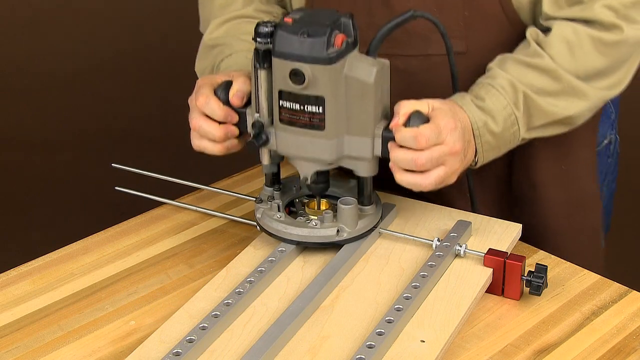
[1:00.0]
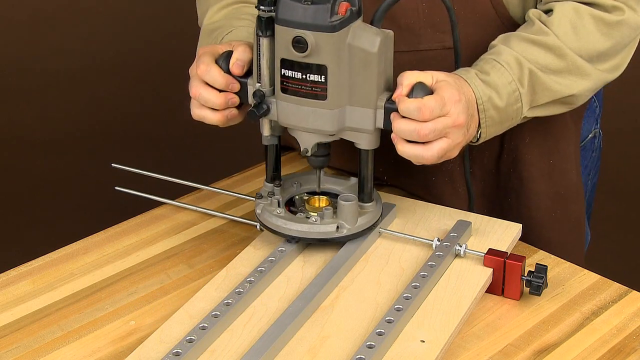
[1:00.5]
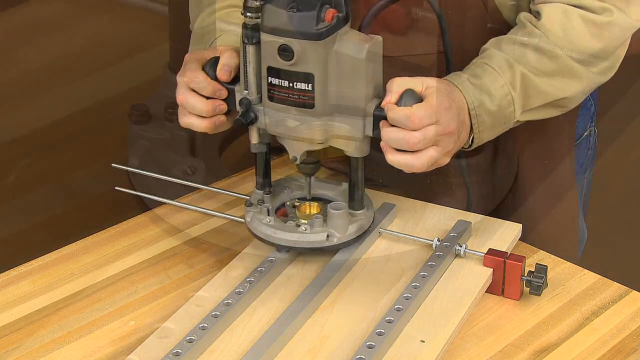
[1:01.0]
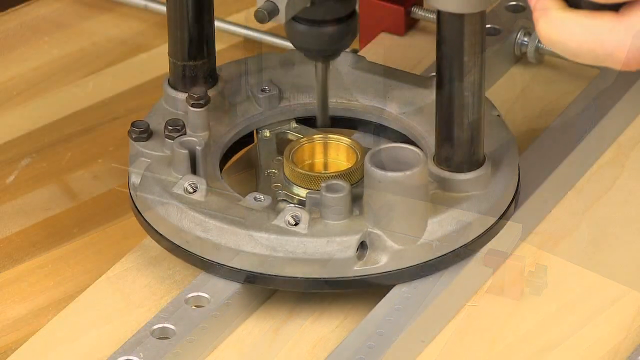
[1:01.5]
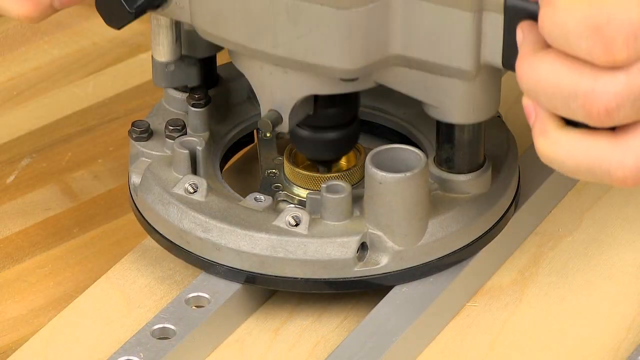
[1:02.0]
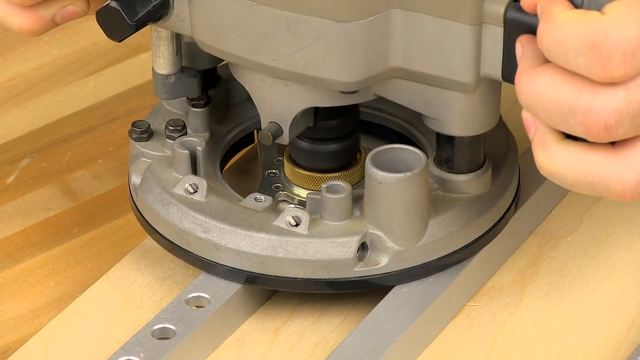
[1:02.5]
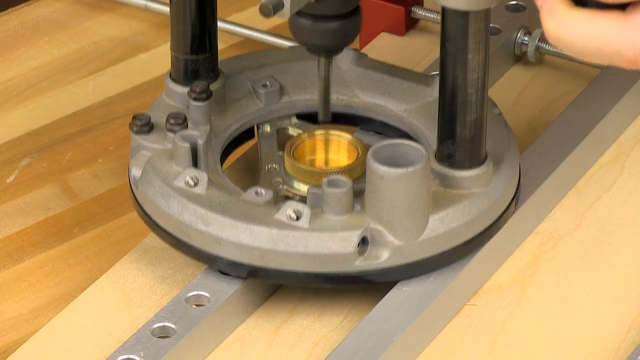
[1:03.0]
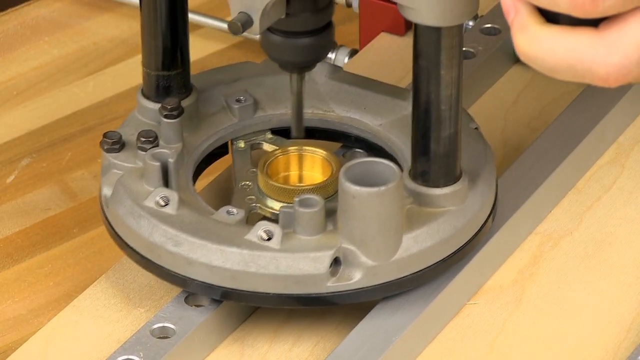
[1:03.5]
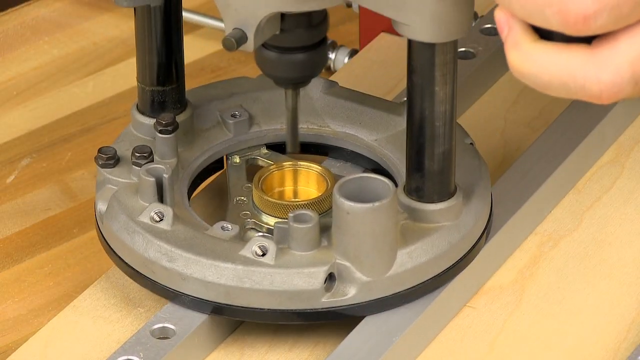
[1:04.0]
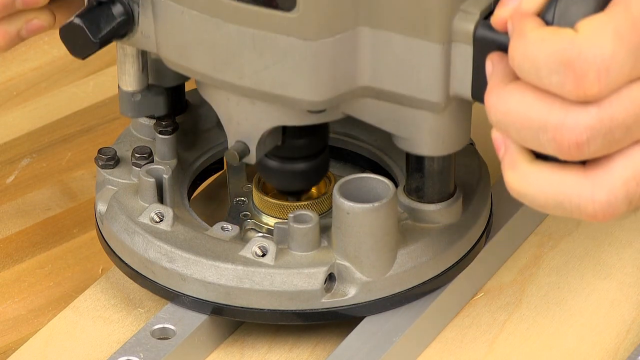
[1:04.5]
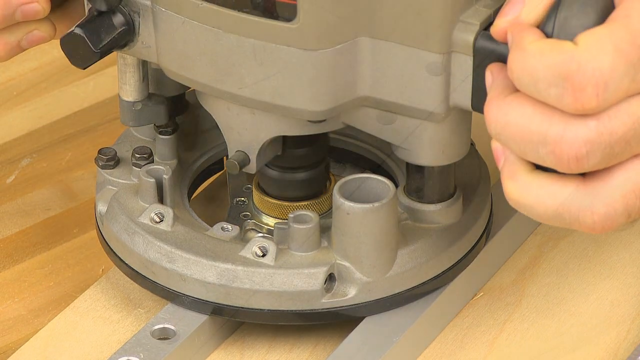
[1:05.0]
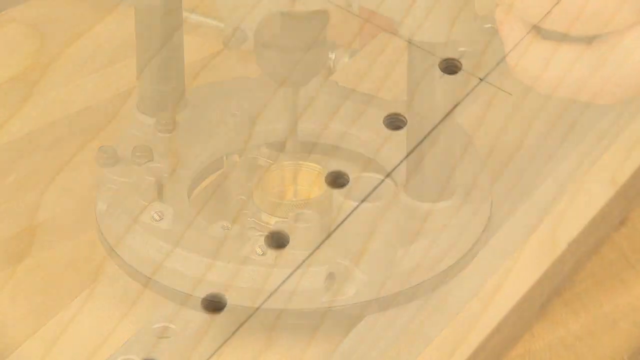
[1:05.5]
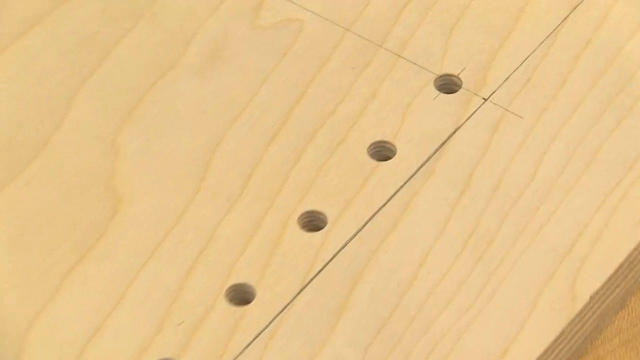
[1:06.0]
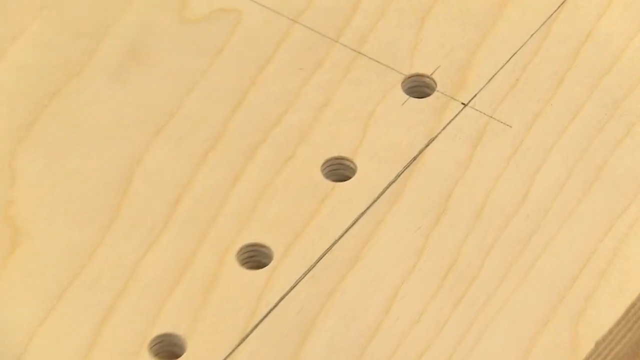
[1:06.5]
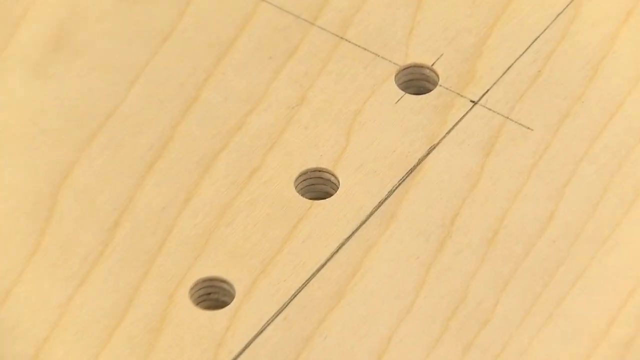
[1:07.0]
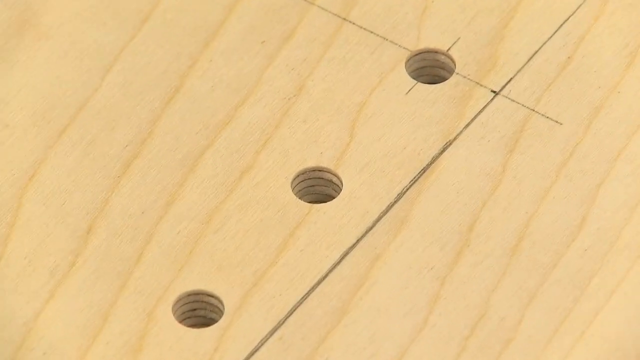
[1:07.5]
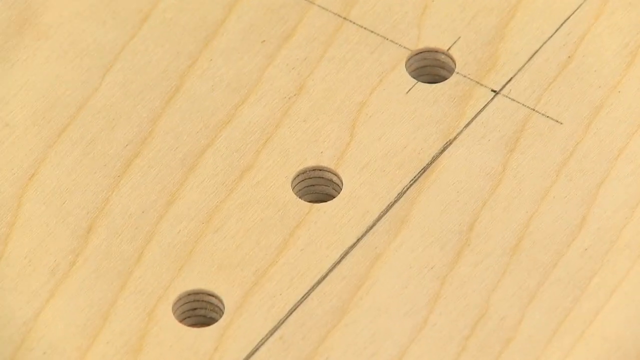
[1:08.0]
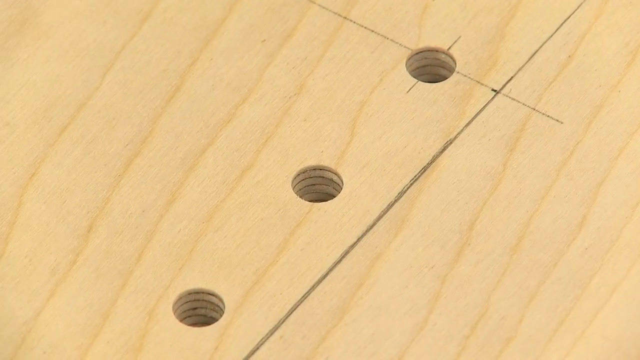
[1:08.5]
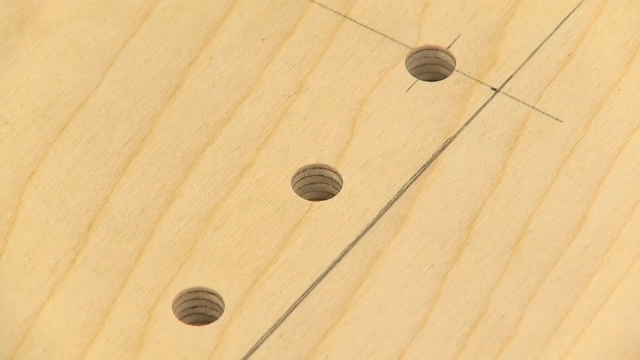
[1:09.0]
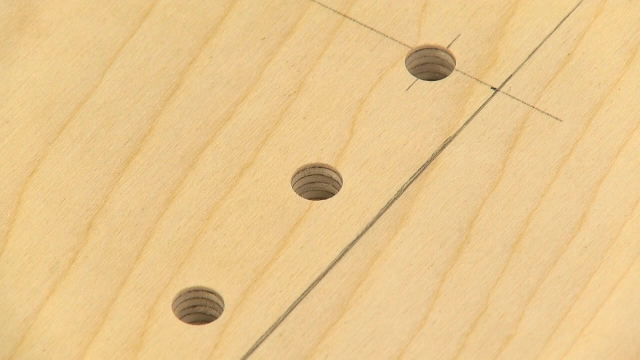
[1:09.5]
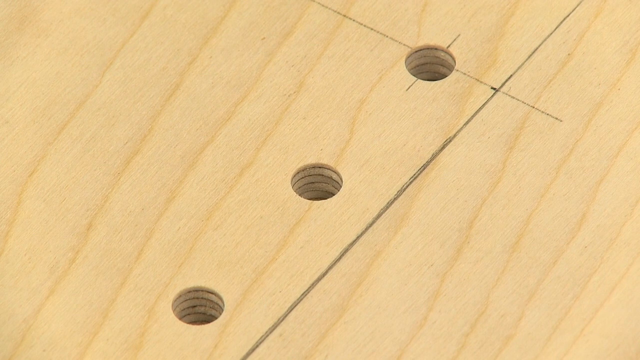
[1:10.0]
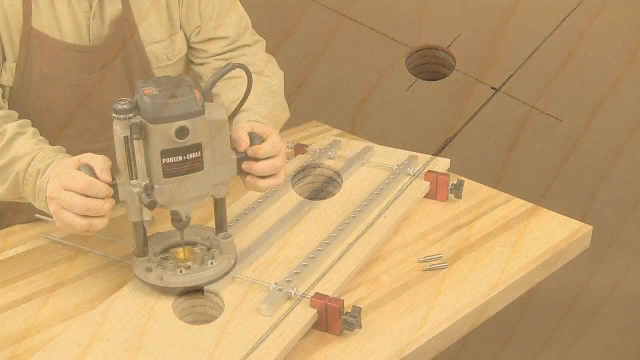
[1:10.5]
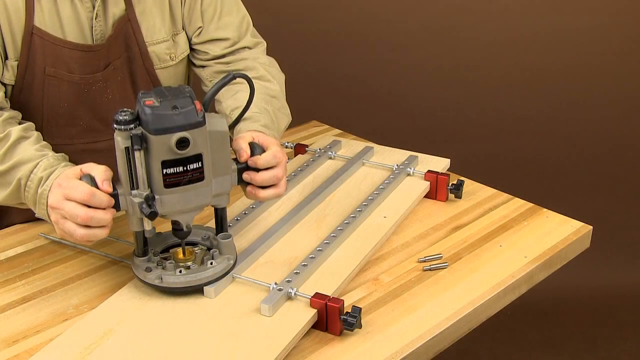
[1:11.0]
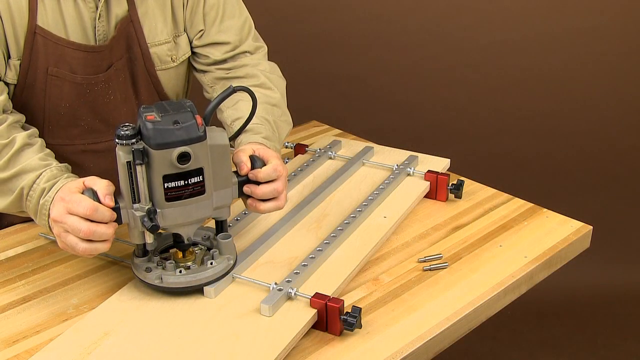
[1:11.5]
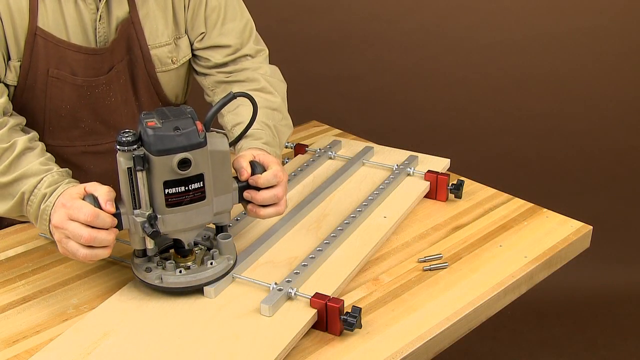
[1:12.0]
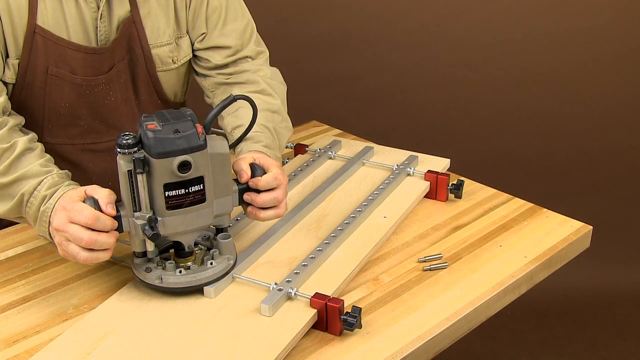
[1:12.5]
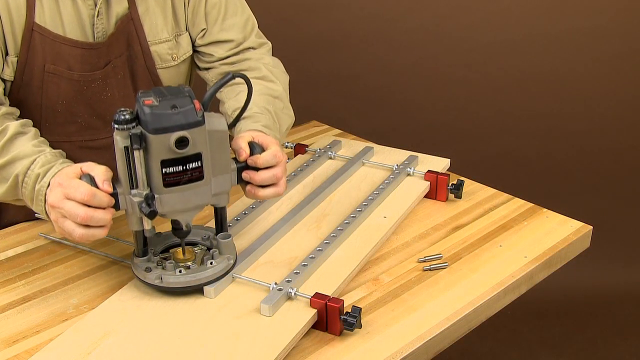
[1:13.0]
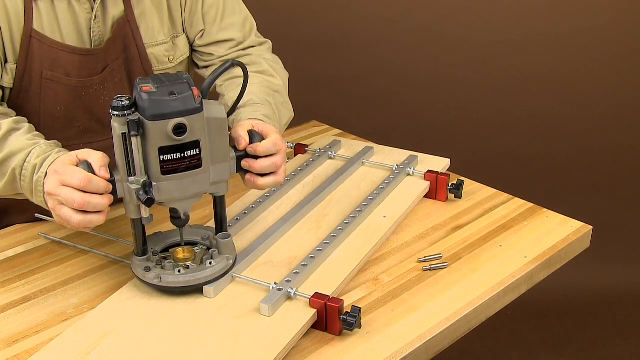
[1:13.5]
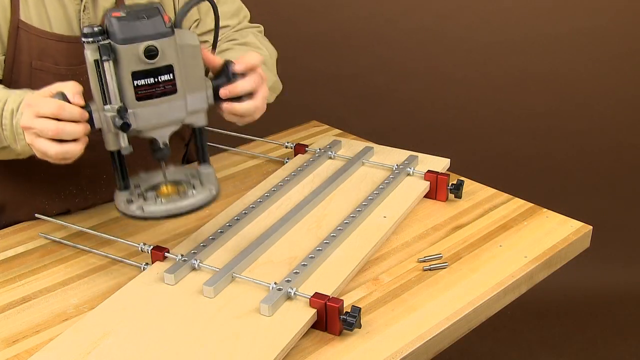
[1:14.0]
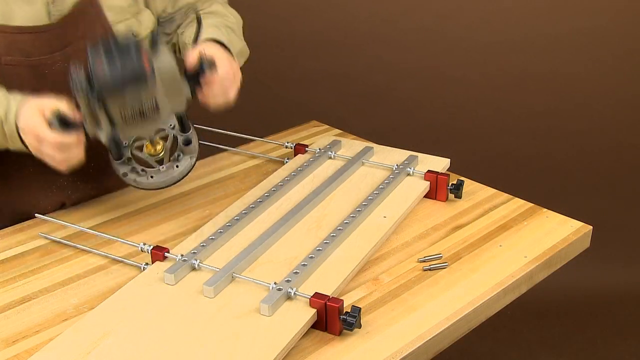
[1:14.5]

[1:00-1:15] The man uses the drill to move from hole to hole on the jig, drilling. Then the jig is gone, and the view pulls back to show all of the holes made using the jig, along with the pencil drawings; the holes look very precise. The setup looks very sturdy and flat, does not look like it wobbles in the slightest, and the drill looks very stable and easy to use. There is a really close-up image of the drilled holes after the view pulls back. The logo is in the bottom right corner: a red square with white lettering that apparently says "Woodpeckers".